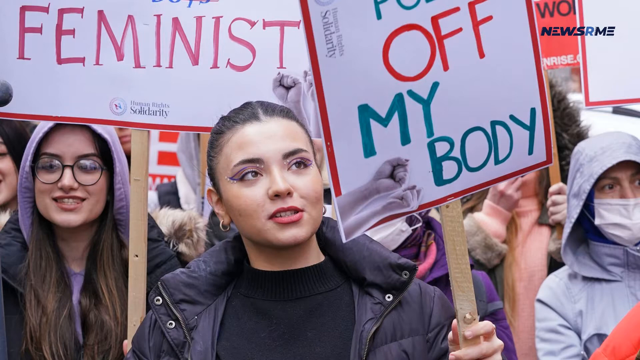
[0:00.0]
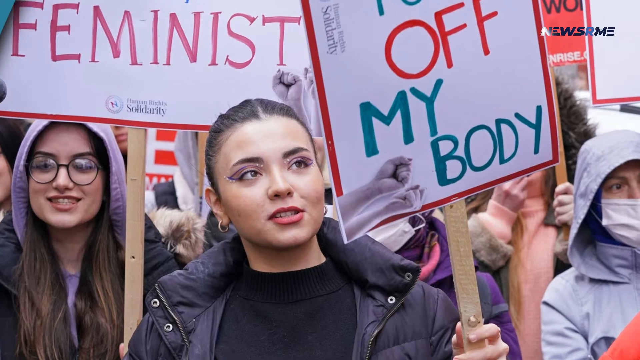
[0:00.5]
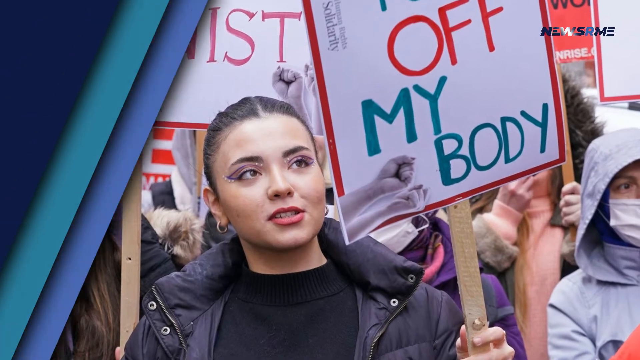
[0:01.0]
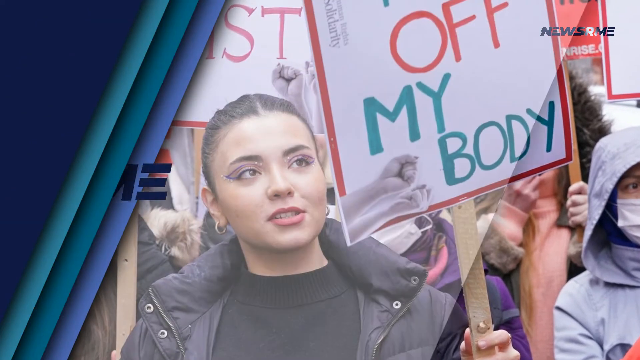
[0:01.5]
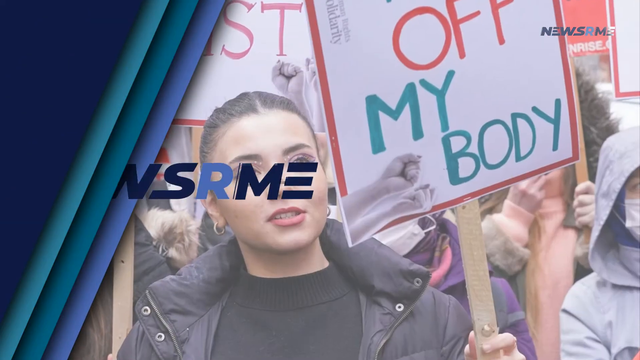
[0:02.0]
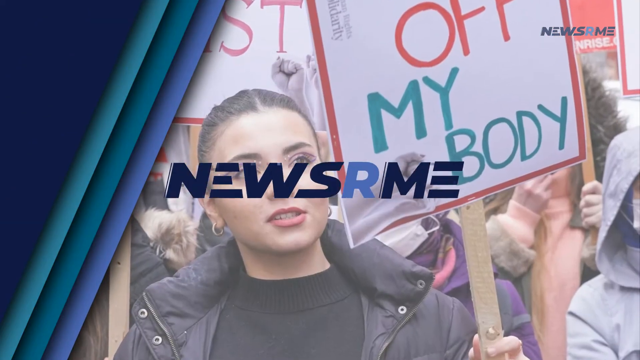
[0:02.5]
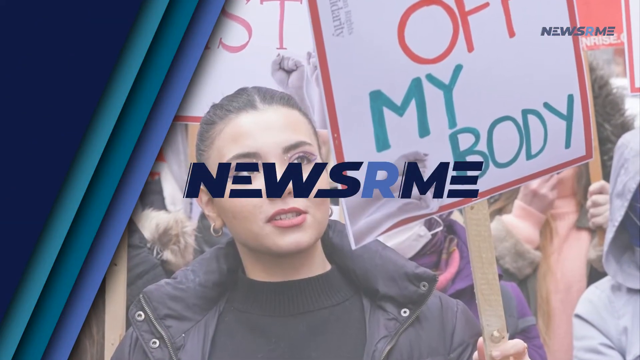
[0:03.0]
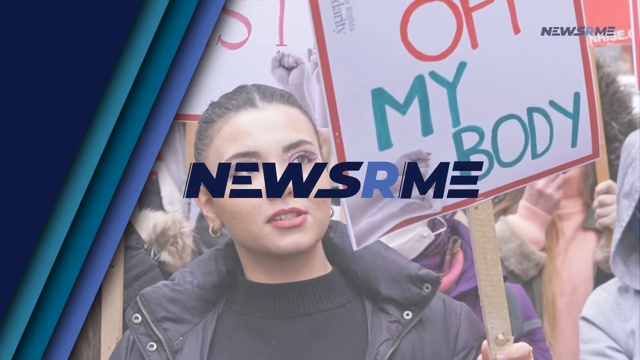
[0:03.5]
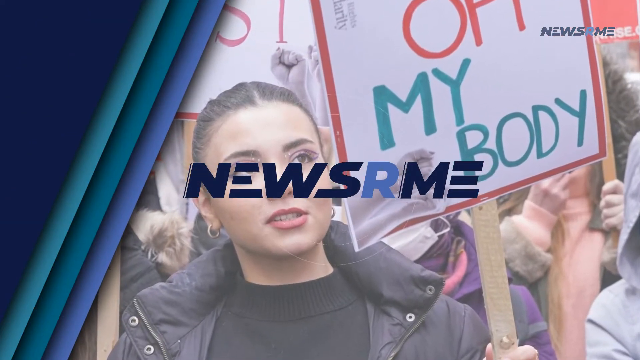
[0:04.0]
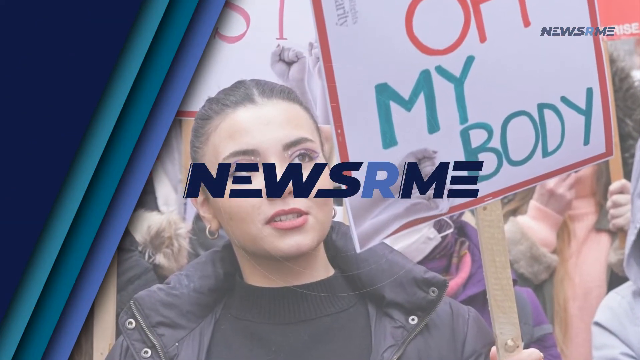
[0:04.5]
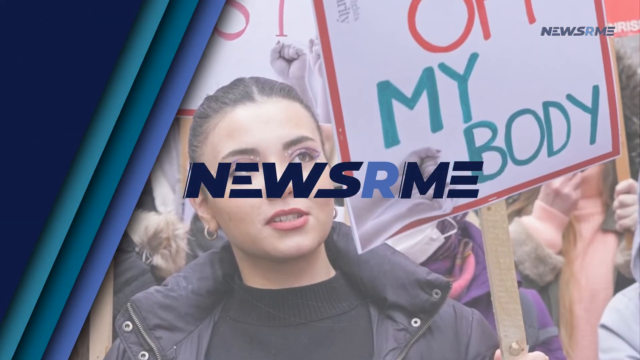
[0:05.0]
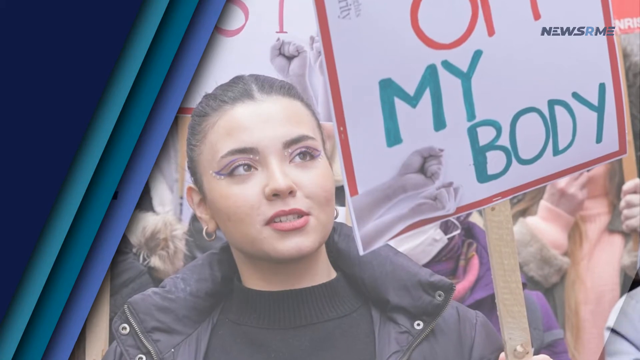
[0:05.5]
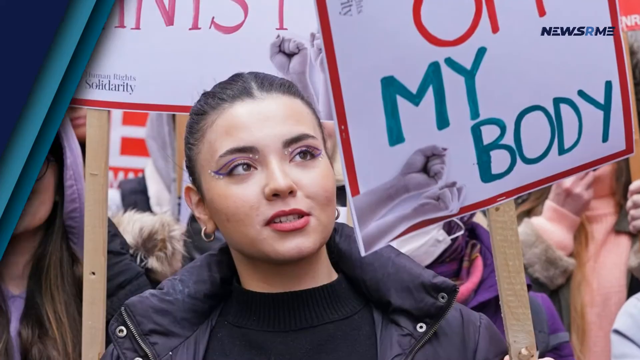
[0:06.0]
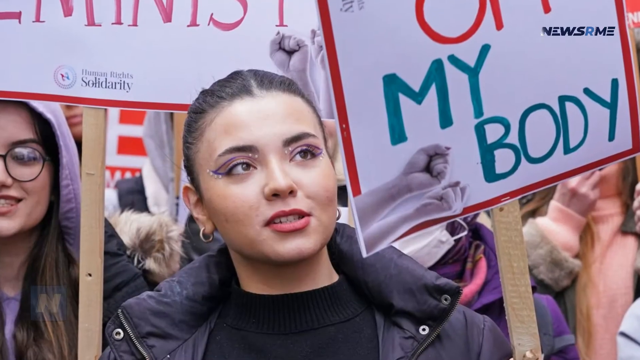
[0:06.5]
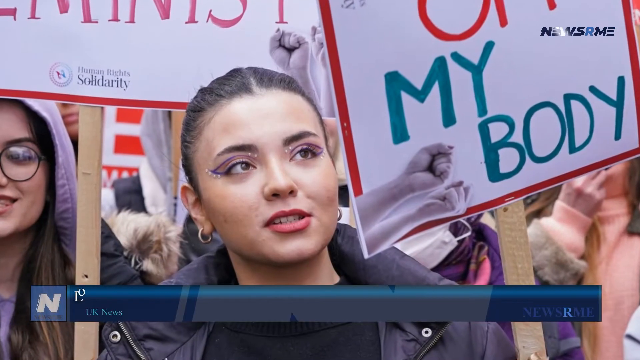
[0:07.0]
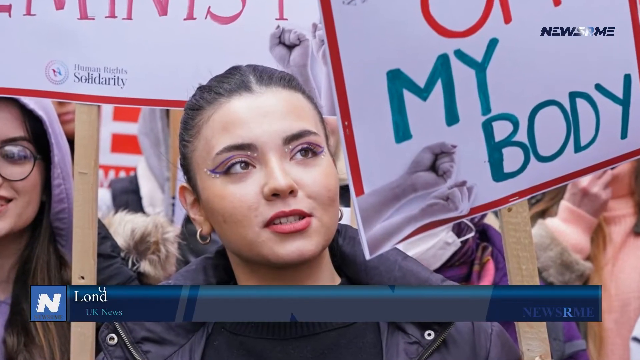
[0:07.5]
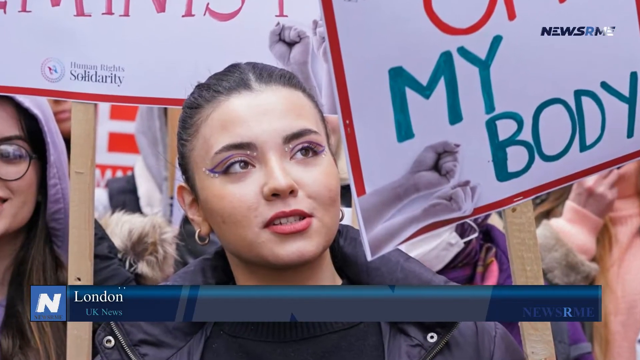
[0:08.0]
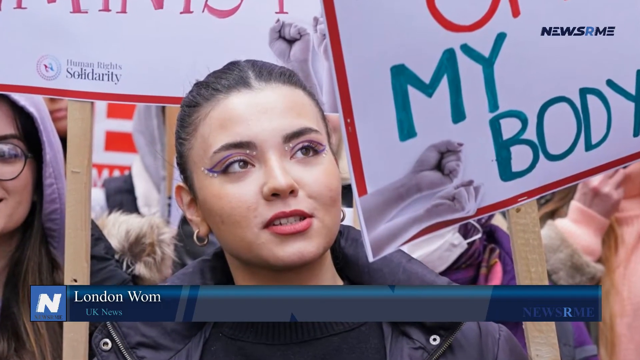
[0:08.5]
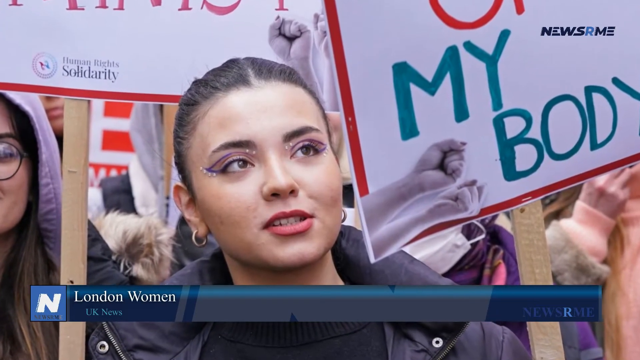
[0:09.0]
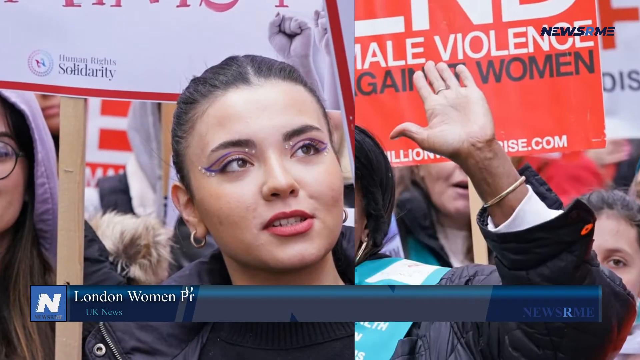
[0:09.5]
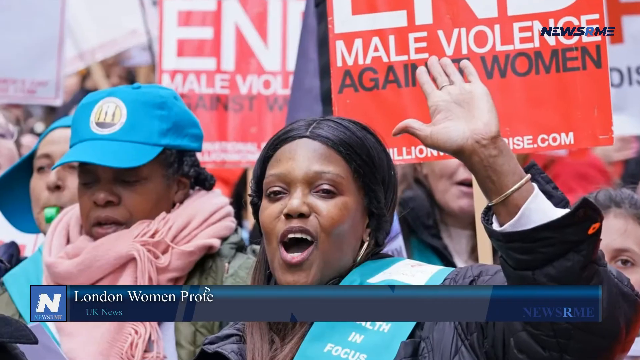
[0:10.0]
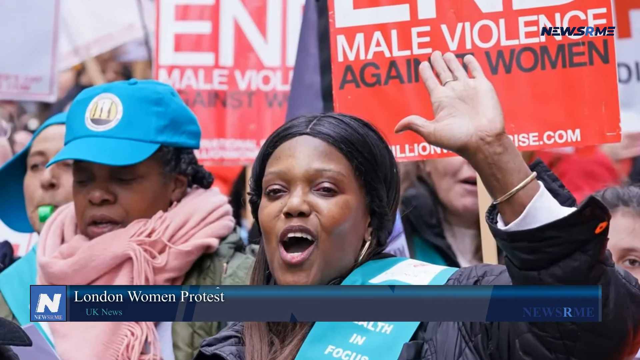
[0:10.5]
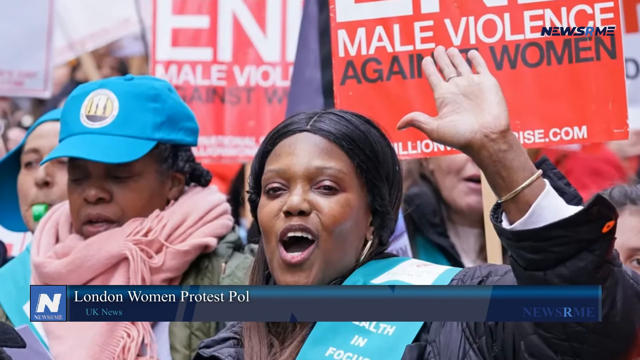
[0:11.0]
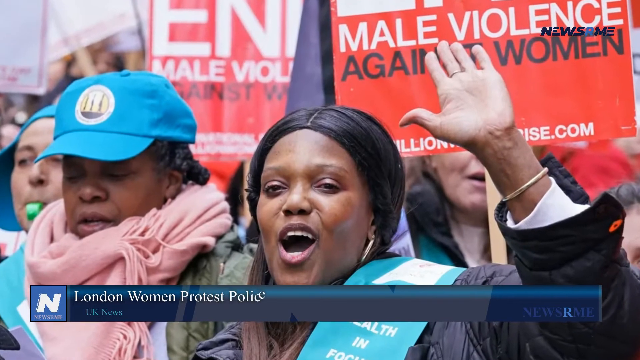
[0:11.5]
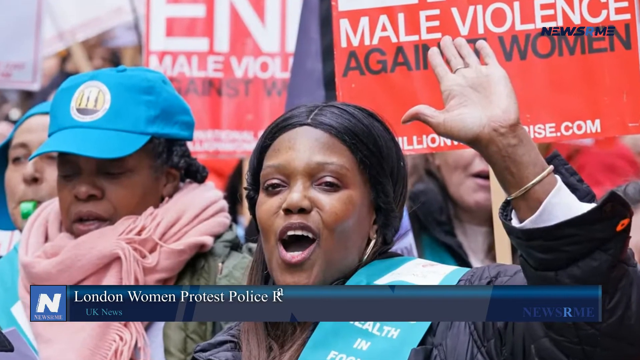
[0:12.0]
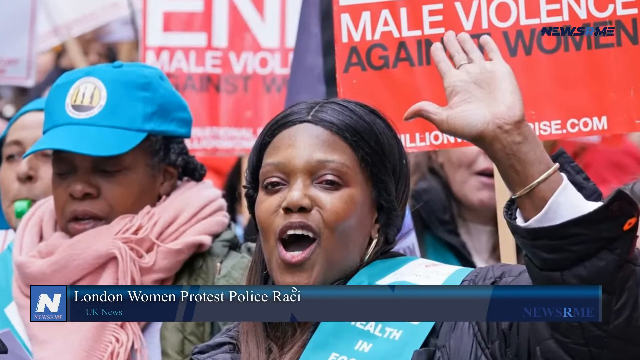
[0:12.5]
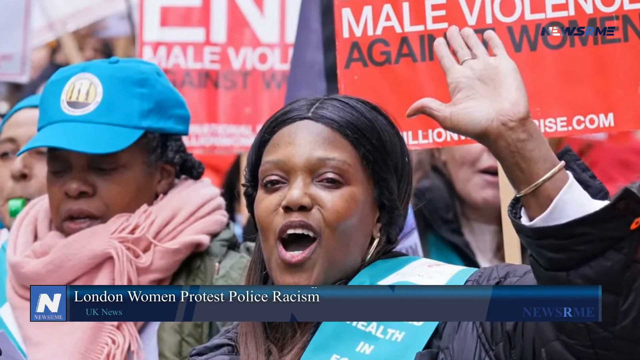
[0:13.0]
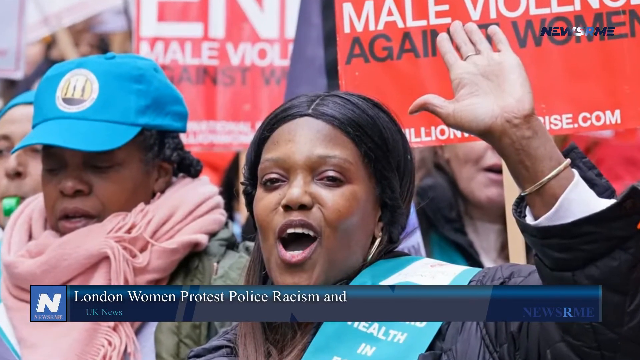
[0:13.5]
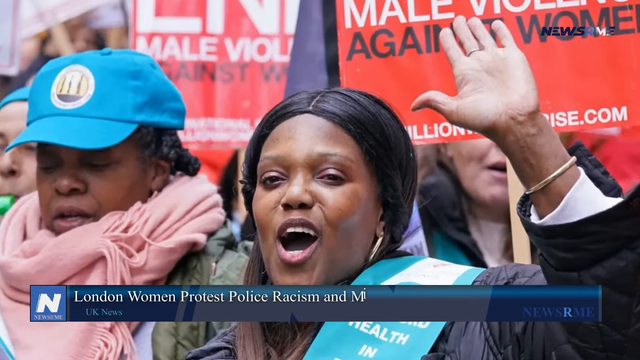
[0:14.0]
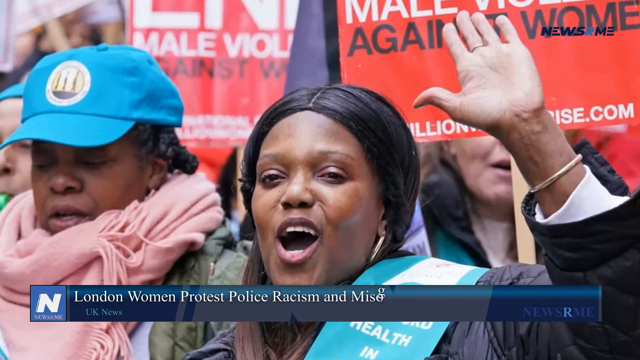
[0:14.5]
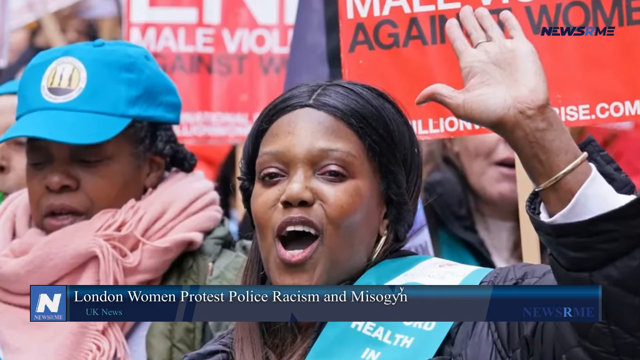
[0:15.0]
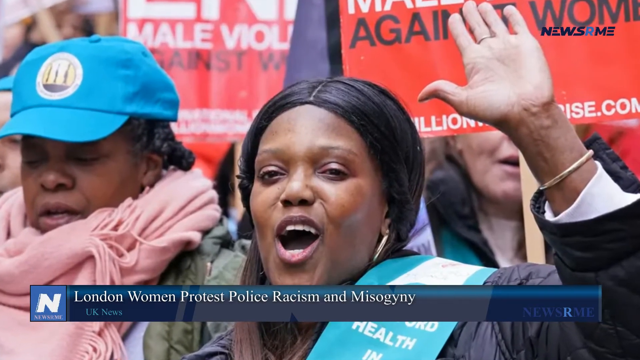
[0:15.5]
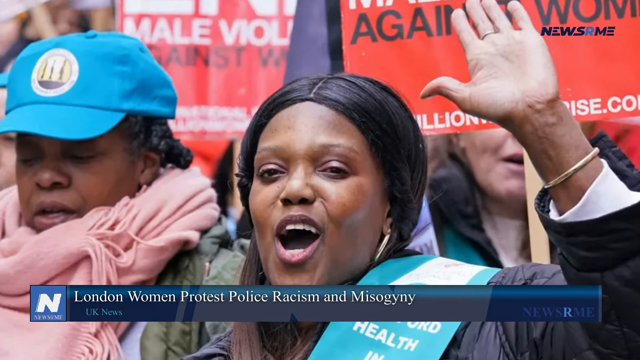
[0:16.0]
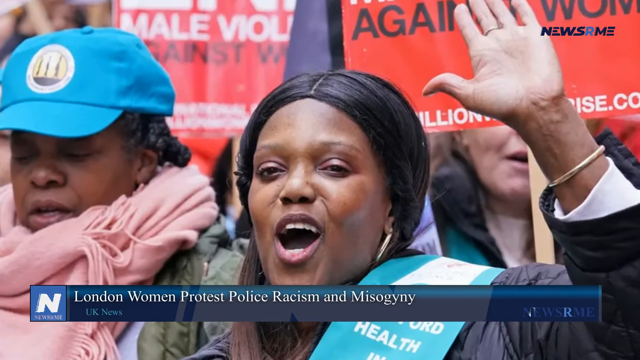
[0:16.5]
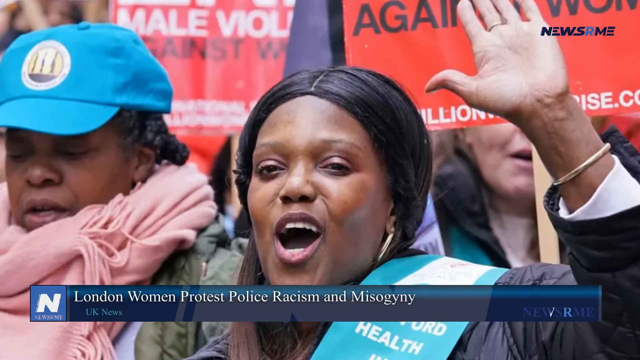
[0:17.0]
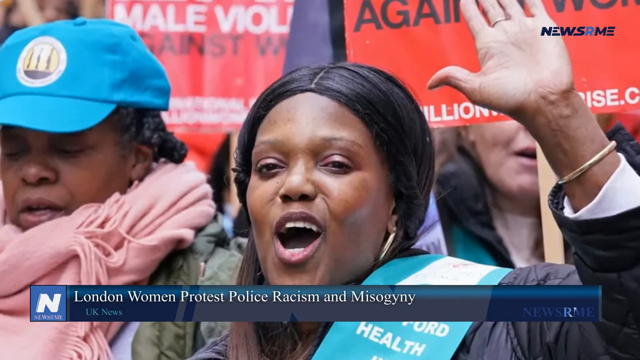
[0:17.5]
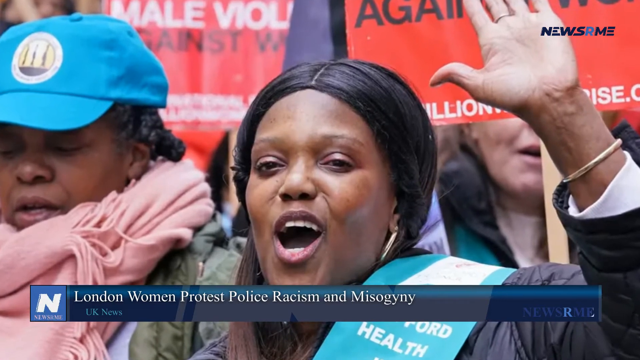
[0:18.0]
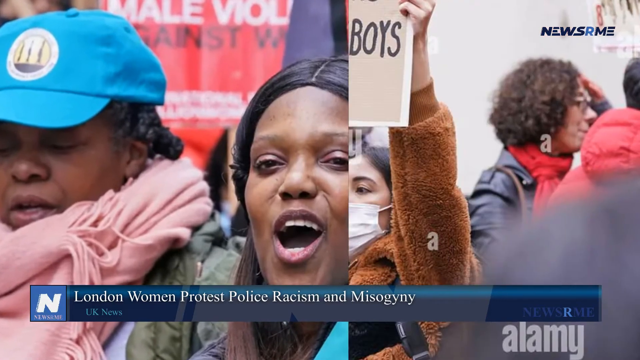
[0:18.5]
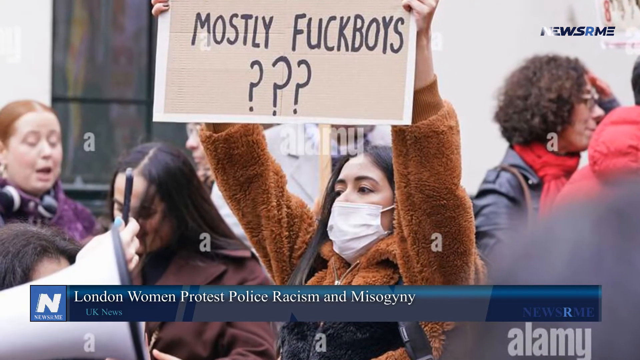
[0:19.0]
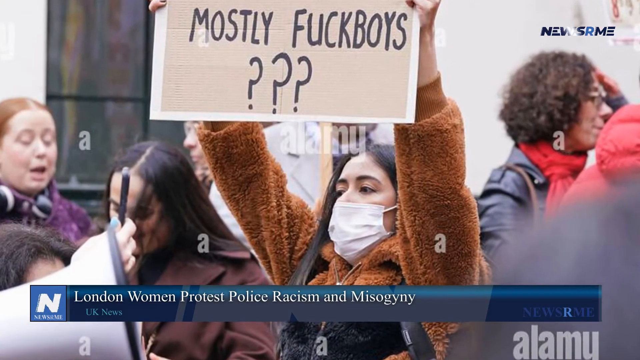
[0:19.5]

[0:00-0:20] The video opens with color blocks on the left and a diagonal, along with a news logo reading "News RME." Perhaps three, four or five still photos follow, with a zooming effect that moves across them and into them. The photos depict women's marches, and at one point a banner across the bottom reads "London women's protests against police racism and misogyny." The women in the photos are of various races and hold signs; the full messages cannot be made out, but some signs say "feminist" and some say "off my body." The women wear jackets, some with hoods over their heads, and the signs have wooden handles, with a white background and text at the top.